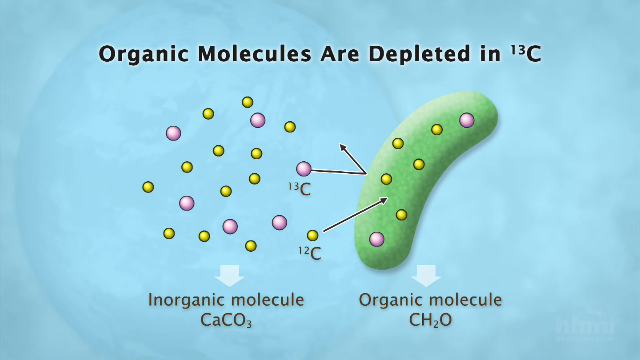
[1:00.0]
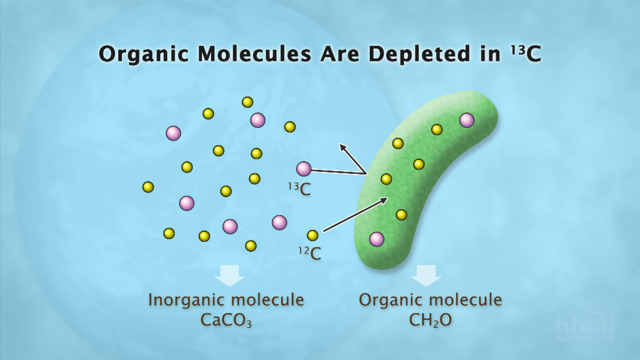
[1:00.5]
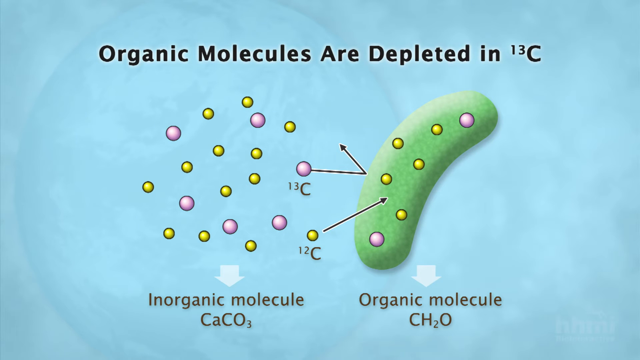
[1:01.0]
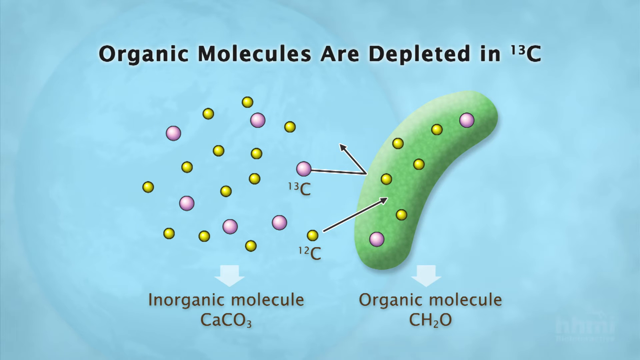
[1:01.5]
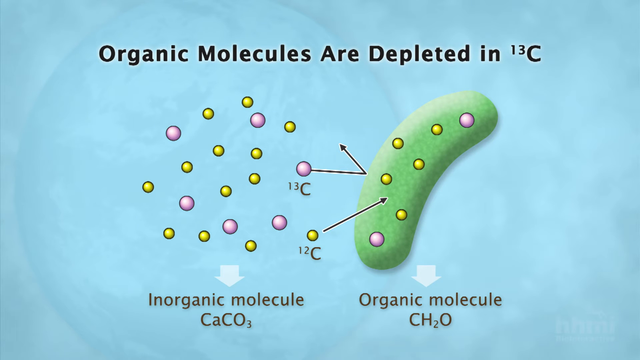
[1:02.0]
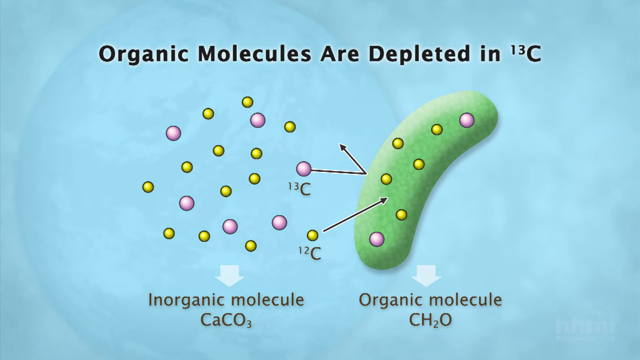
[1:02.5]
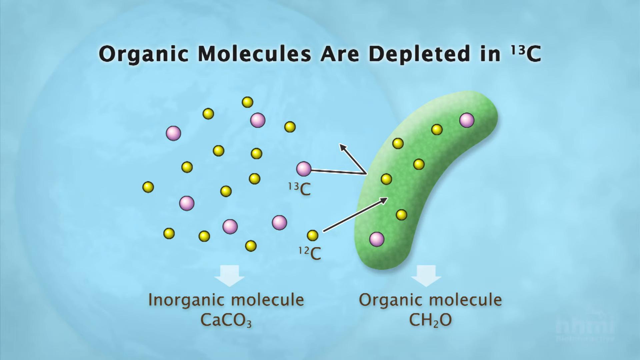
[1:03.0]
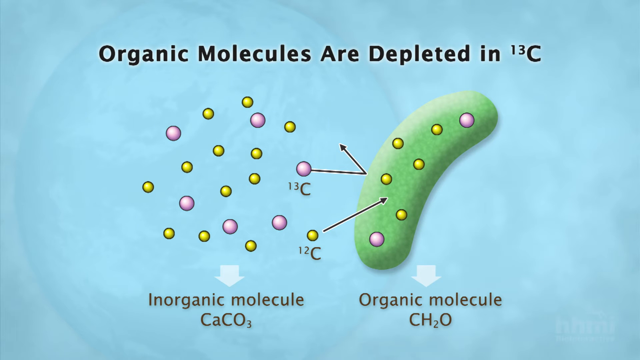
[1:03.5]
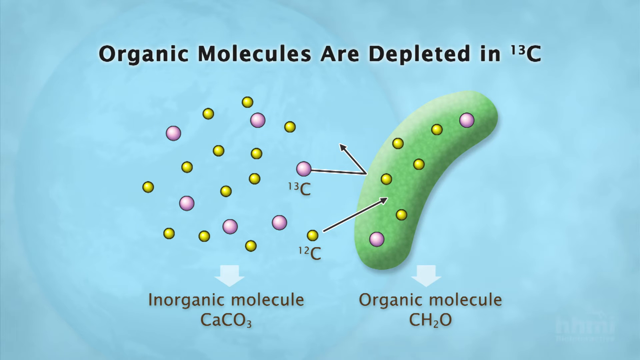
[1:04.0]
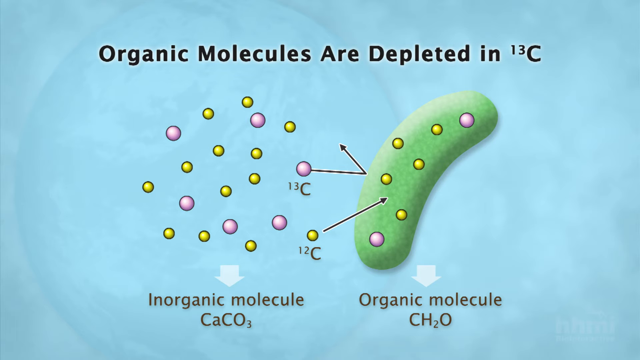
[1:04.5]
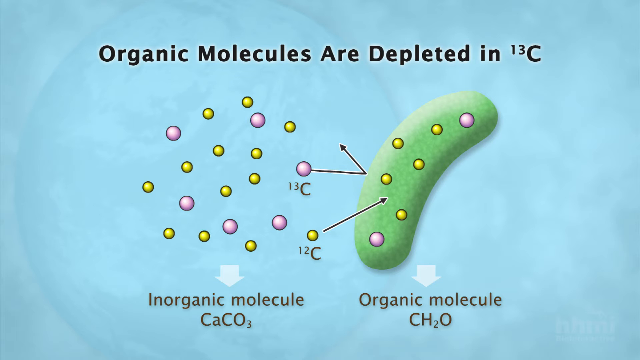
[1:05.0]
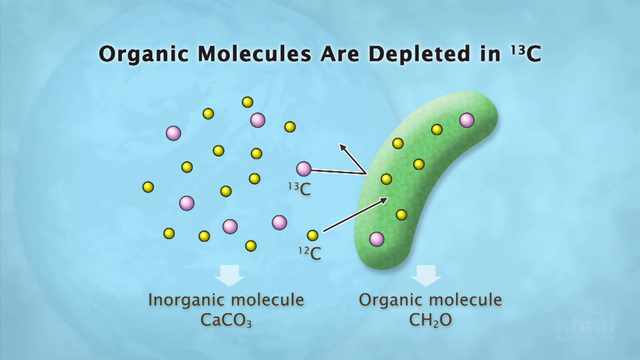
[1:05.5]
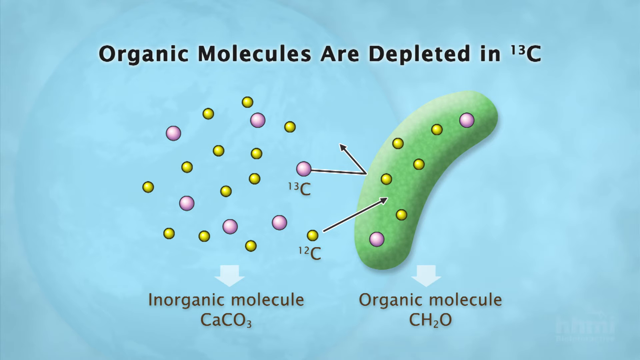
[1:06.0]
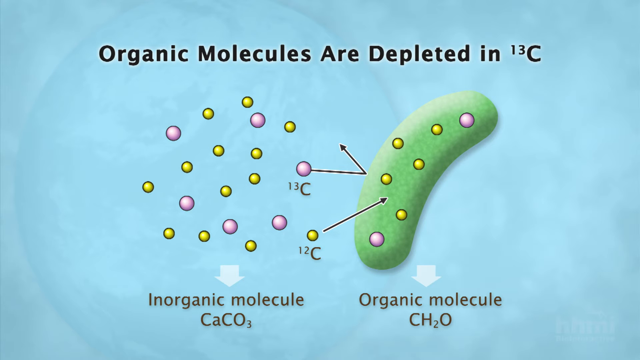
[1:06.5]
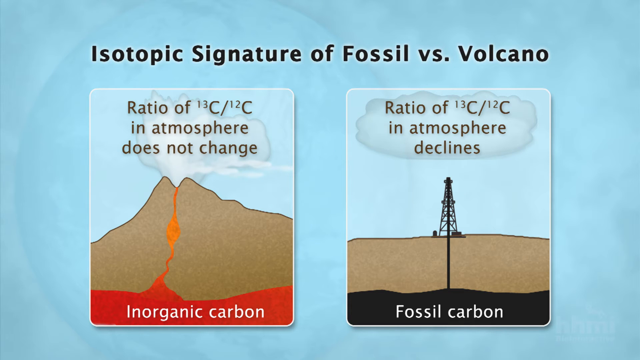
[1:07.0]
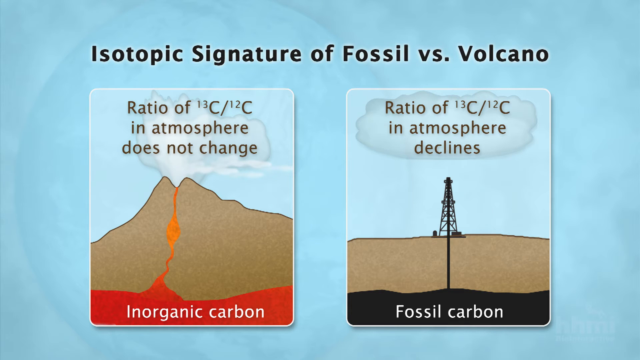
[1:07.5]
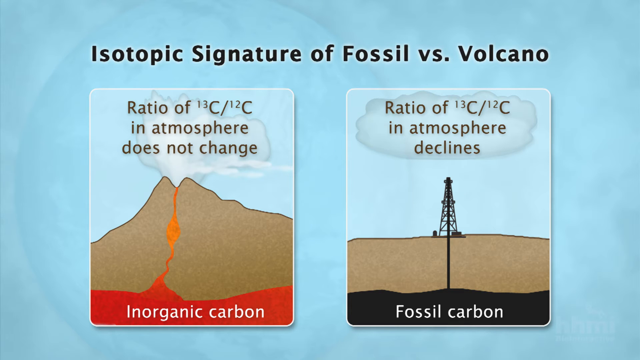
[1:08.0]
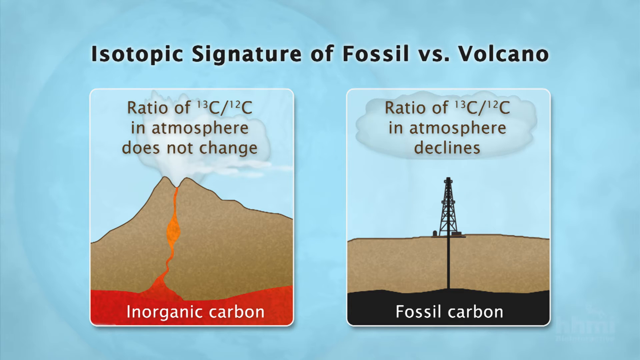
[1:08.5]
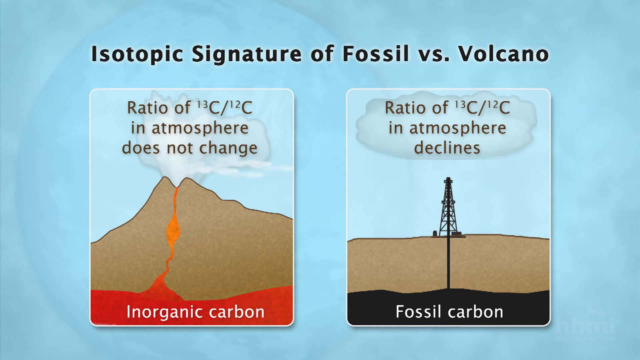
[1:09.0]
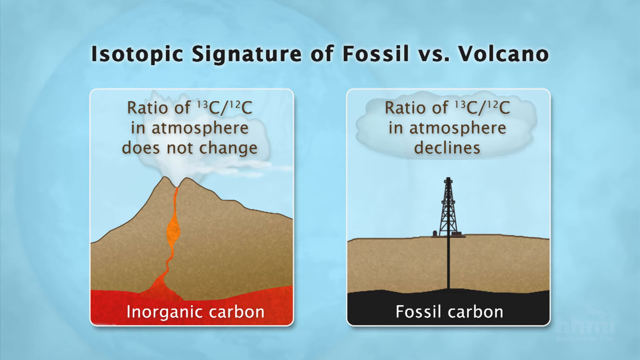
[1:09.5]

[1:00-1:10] A close-up of the presentation slide shows the molecules reacting with the larger green structure that looks like a pickle. It says "Organic molecules are depleted in 13C." The molecules are shown as little pink and yellow dots, with arrows pointing at the pickle-like structure. Below that it says "Inorganic molecule CaCO3" and next to that "Organic molecule CH2O." The image then changes to another that says "Isotopic signature of fossil vs. volcano," with what looks to be a kind of illustration of a volcano and, next to it, an illustration of what looks to be an oil well.